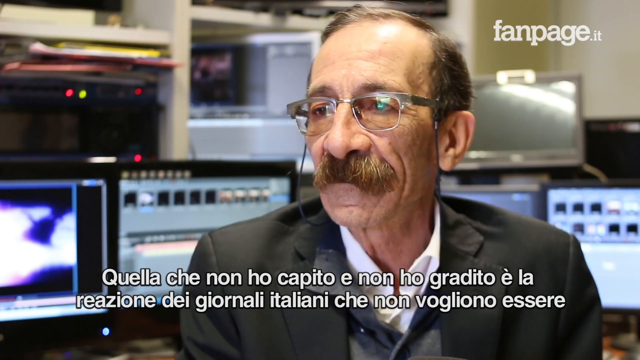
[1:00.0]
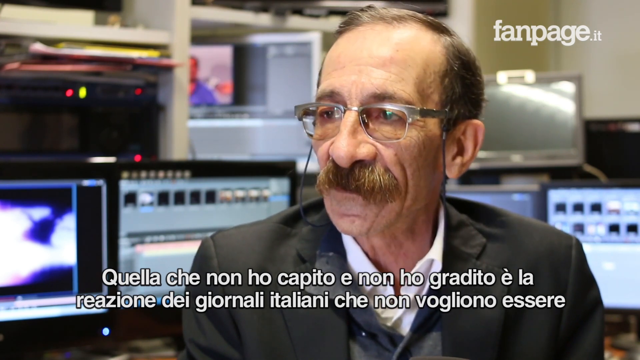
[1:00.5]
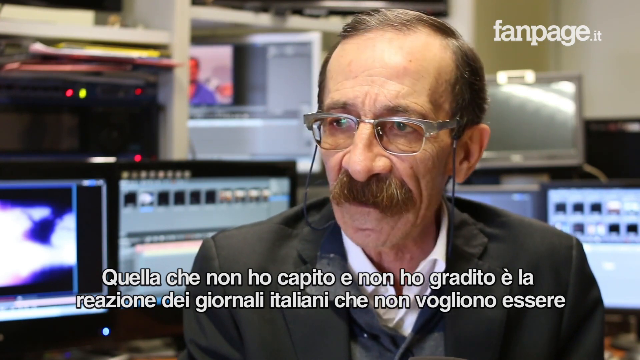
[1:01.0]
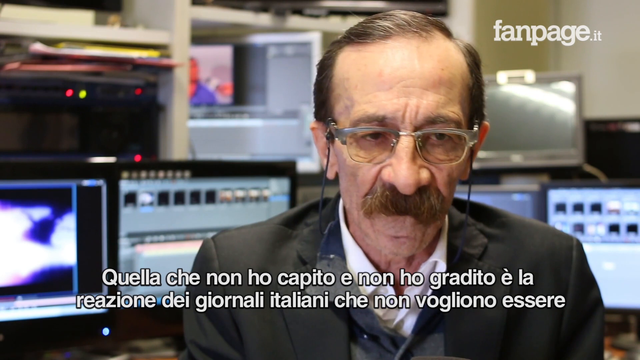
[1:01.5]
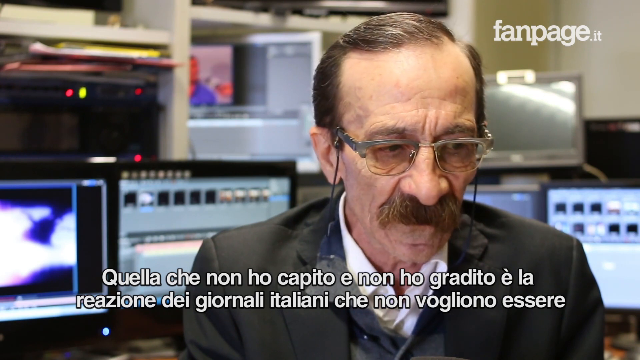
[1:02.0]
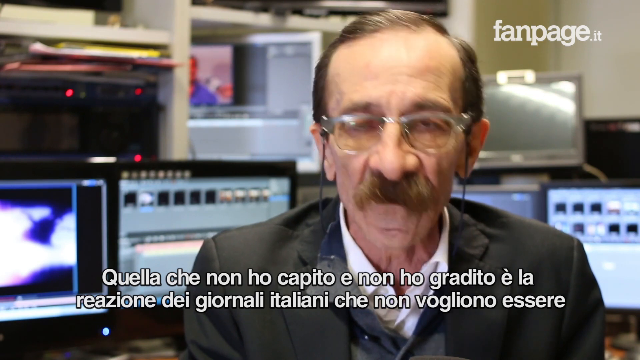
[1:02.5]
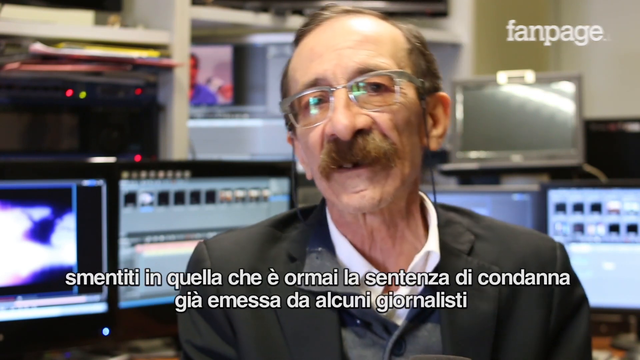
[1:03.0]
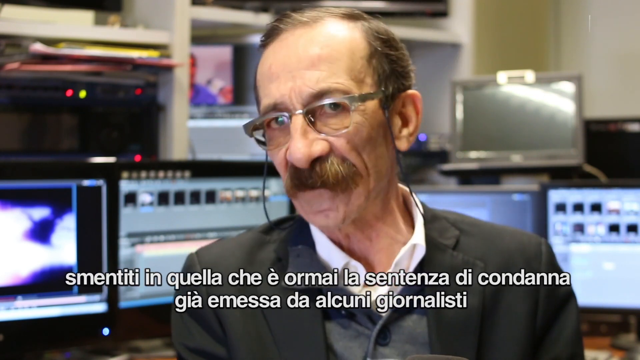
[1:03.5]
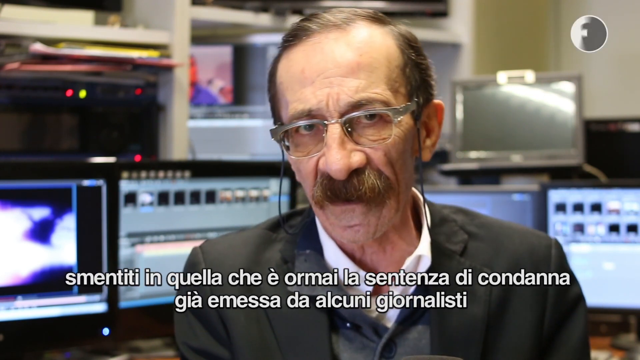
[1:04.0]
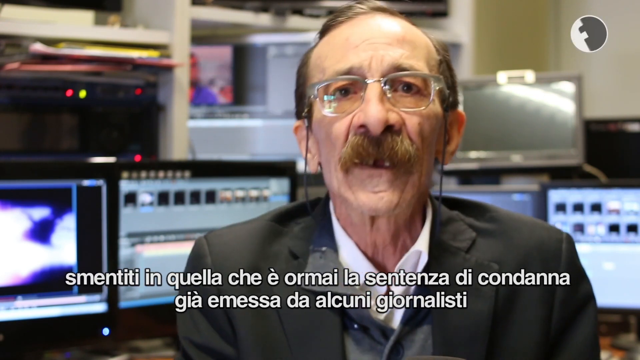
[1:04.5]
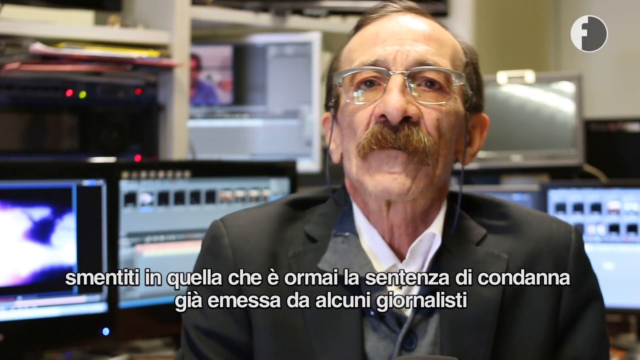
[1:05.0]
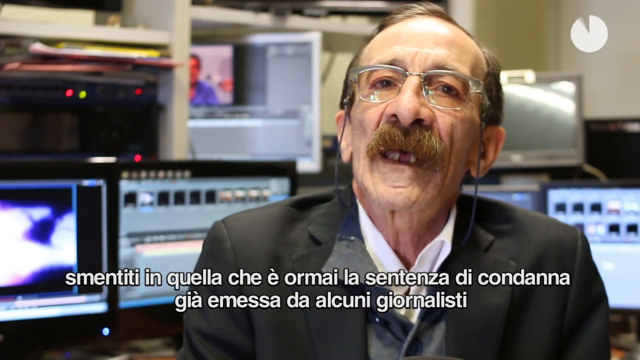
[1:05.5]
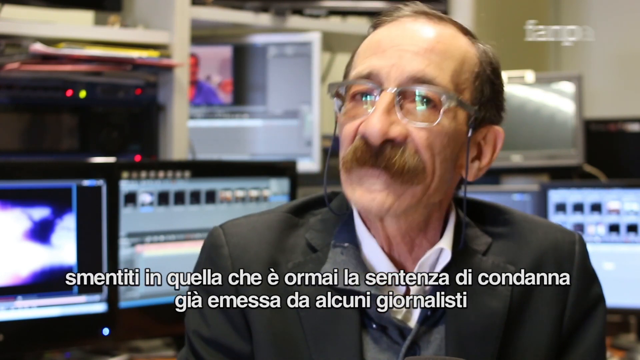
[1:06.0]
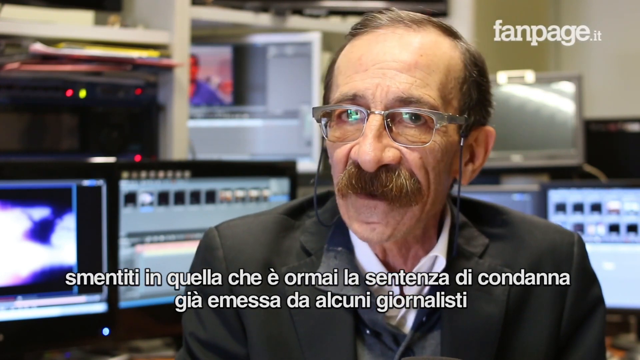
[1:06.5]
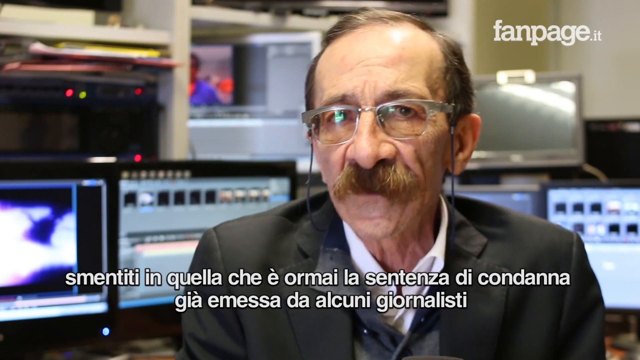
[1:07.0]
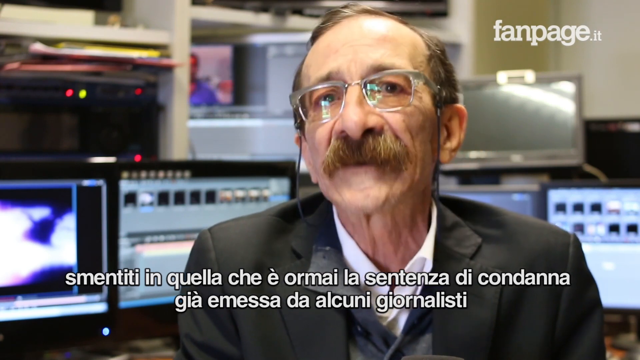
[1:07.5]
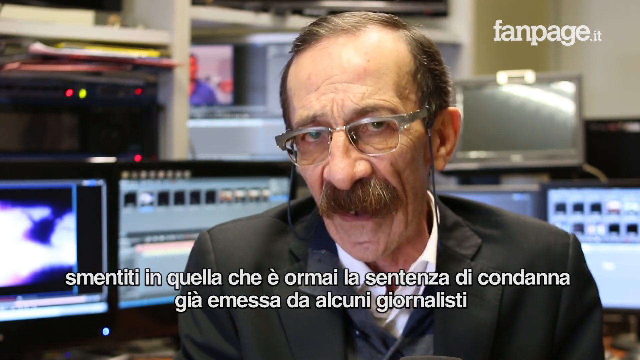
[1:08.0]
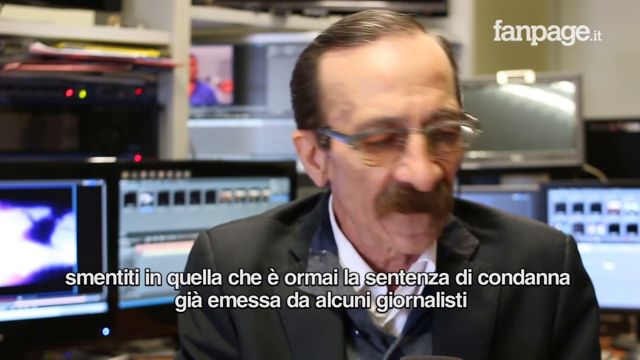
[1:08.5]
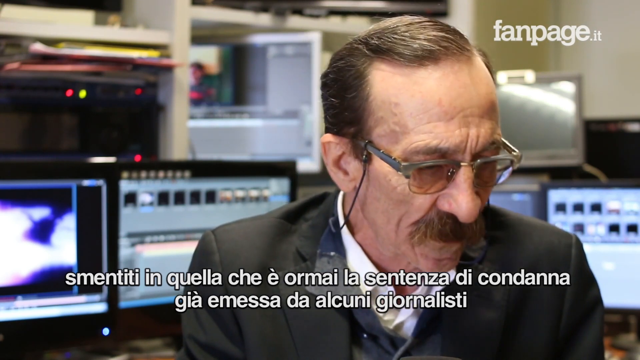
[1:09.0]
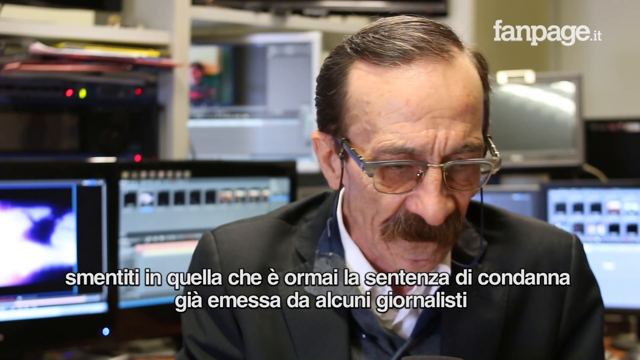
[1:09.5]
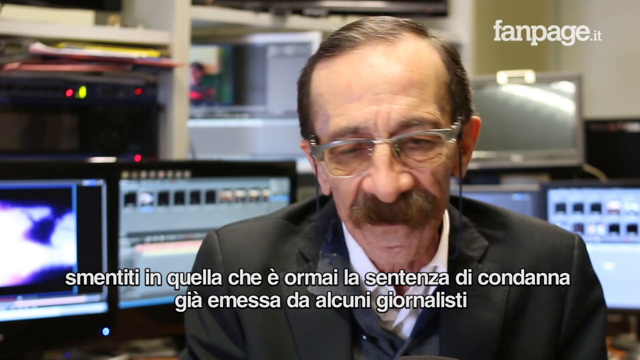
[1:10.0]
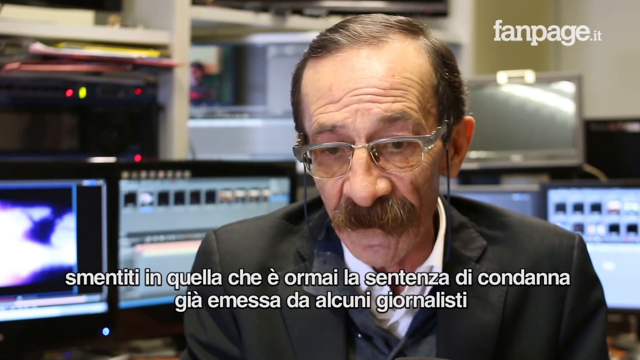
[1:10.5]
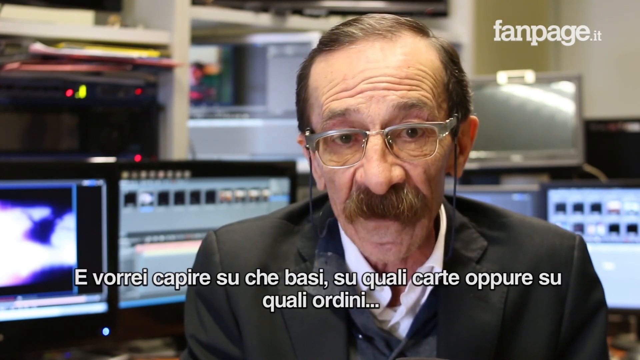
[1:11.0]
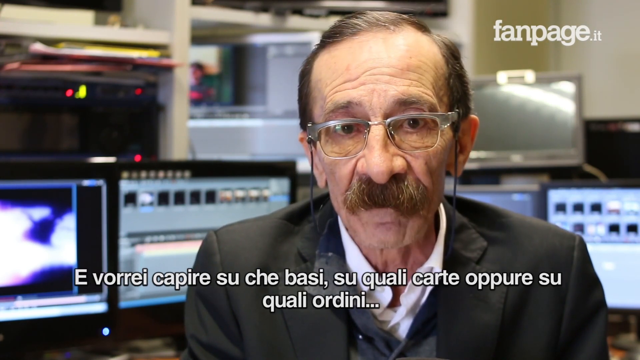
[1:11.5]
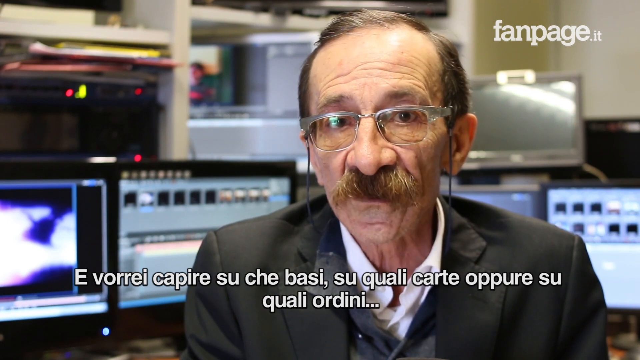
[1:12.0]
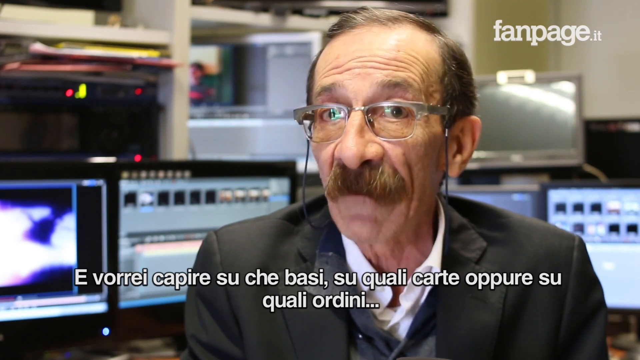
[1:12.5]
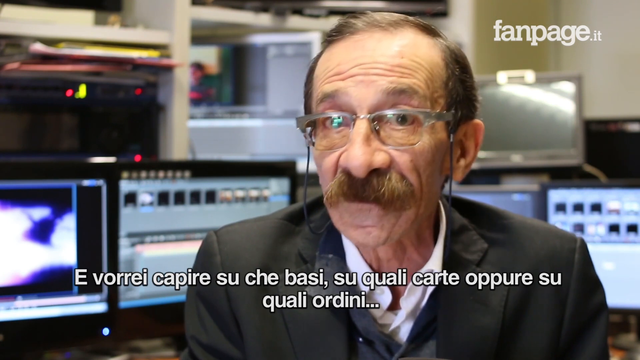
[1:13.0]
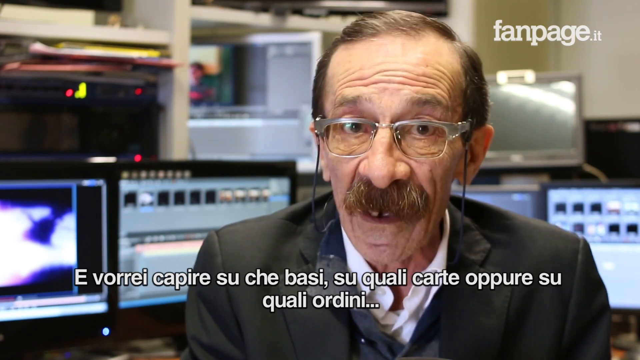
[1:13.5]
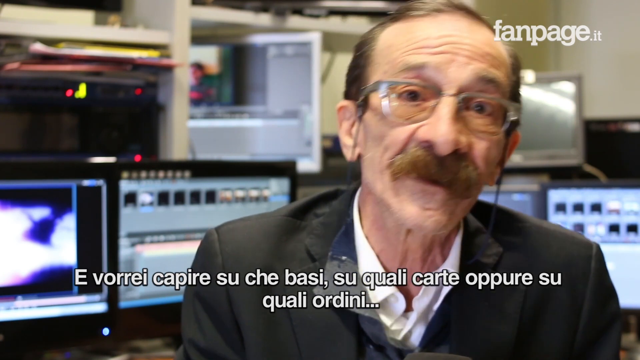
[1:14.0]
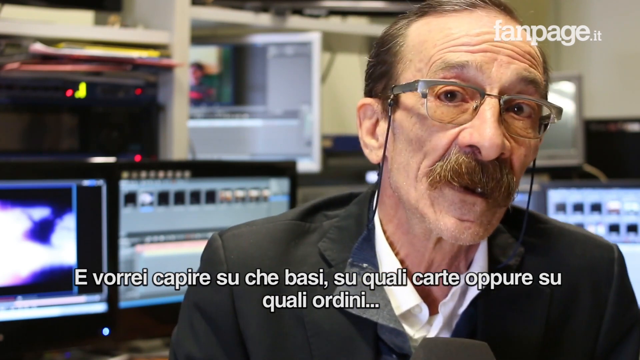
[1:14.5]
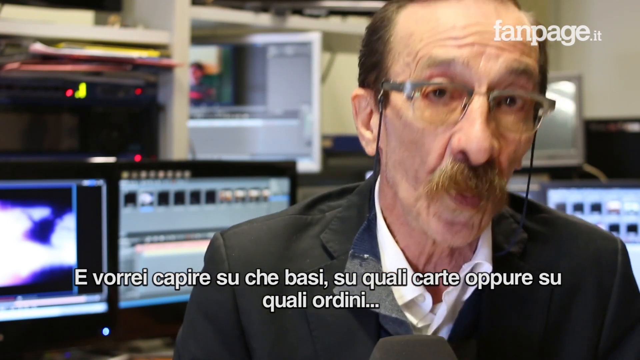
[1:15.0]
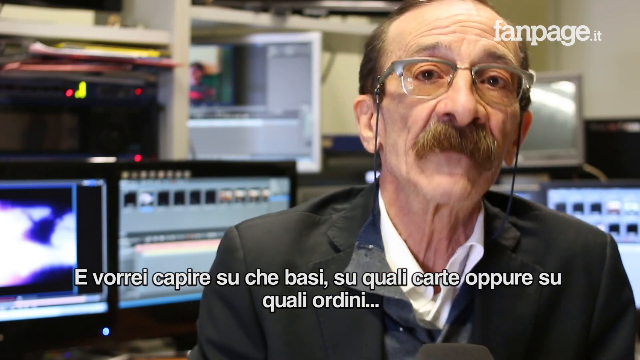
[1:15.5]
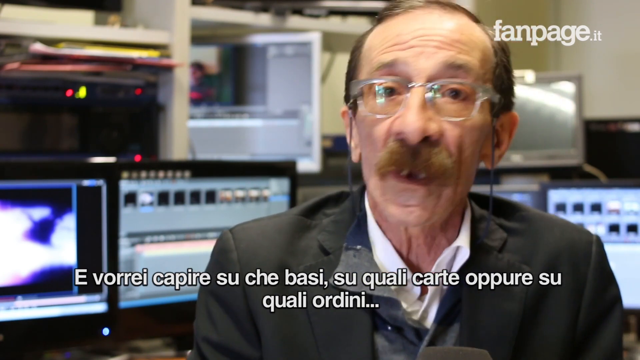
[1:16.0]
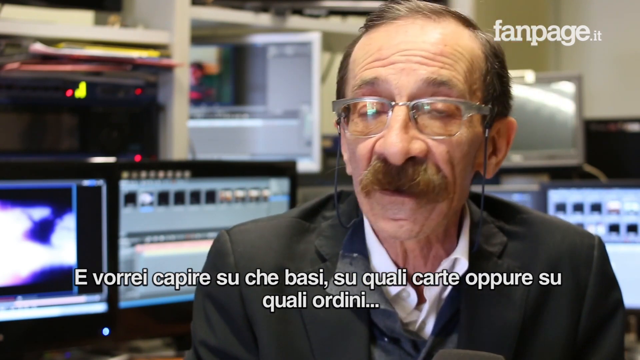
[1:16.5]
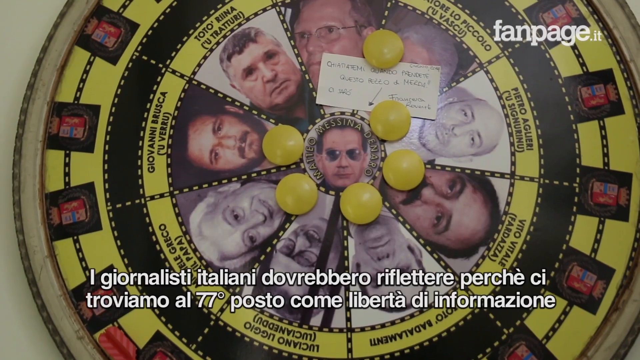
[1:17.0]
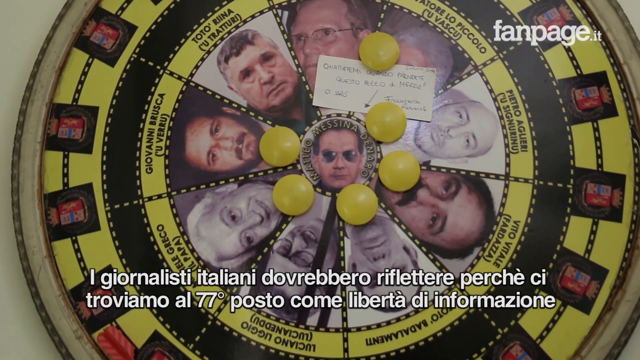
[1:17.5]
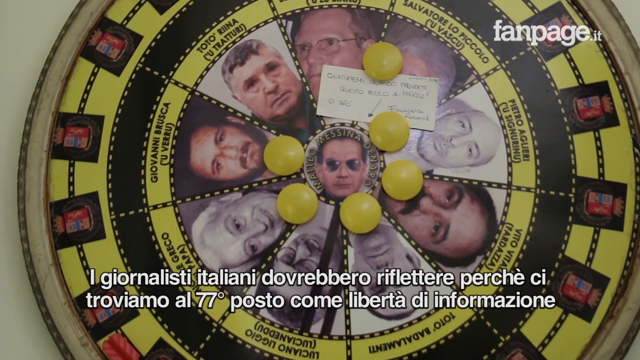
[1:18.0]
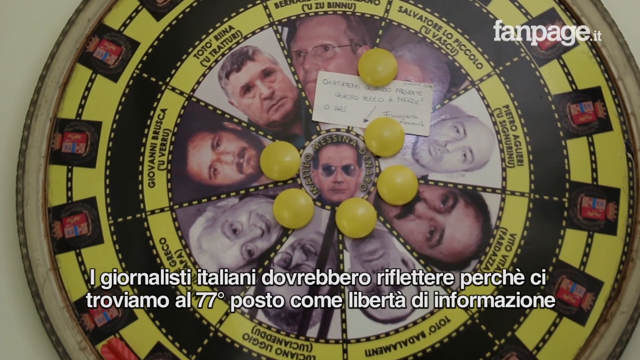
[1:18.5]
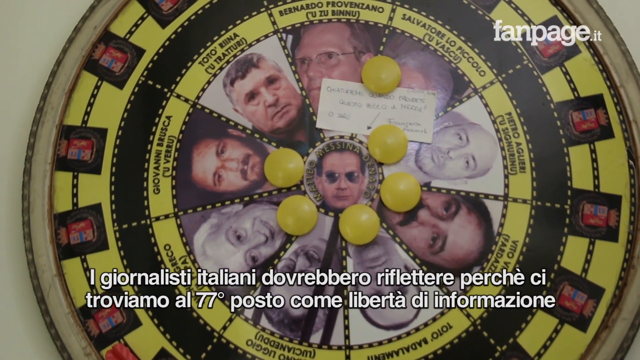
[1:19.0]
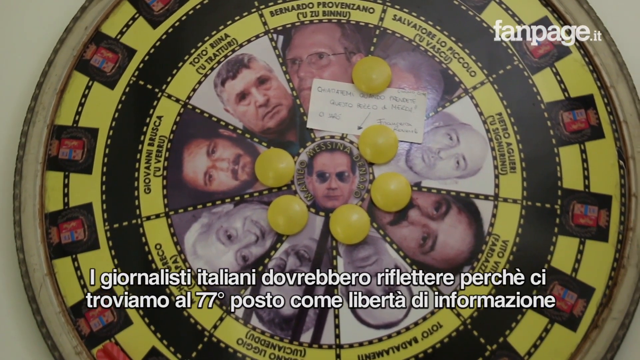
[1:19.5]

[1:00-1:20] The old man, with a receding hairline, glasses and a moustache but an otherwise clean-shaven face, talks and moves his hand around. At first he looks off to his right, then lowers his head a little and focuses his eyes on the camera, talking directly at it while nodding and moving his head for some time. He then looks down and to his left for a while as he talks before moving his eyes back to the camera. He shifts forward in his seat a little, raising his head and looking at the camera again. The next scene shows a round picture with photos of a number of men arranged like a sort of target board: one man is right in the middle on the bullseye, with what looks to be eight or nine other men arranged around him. Some yellow magnets or pins are stuck onto the board, and a small sticky note with writing and an arrow points to the bullseye.